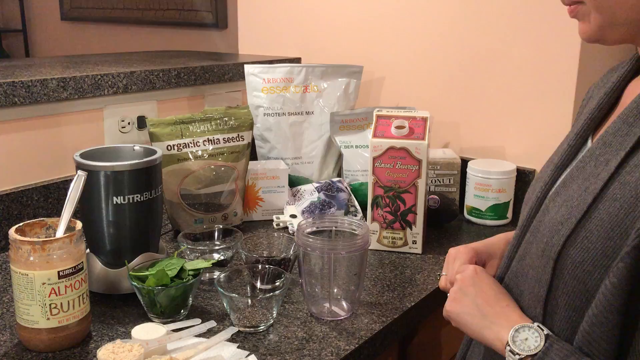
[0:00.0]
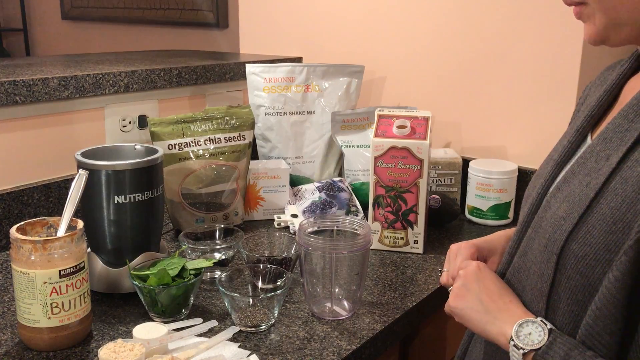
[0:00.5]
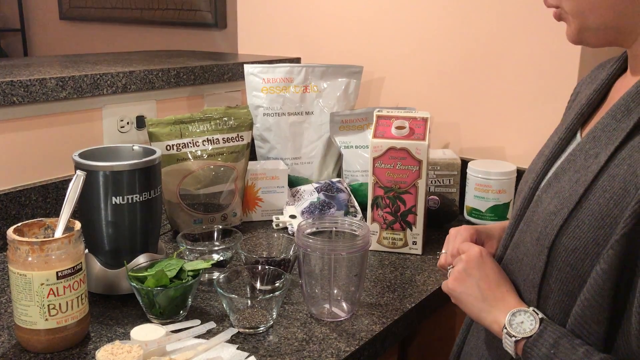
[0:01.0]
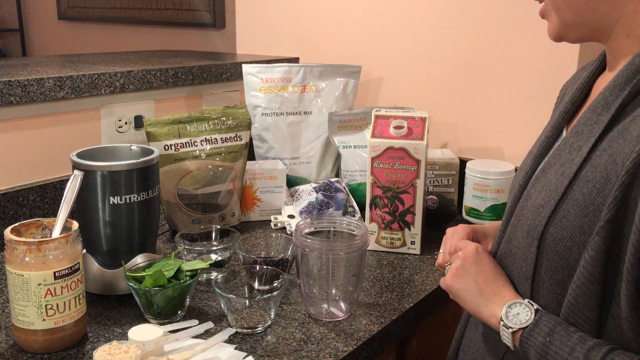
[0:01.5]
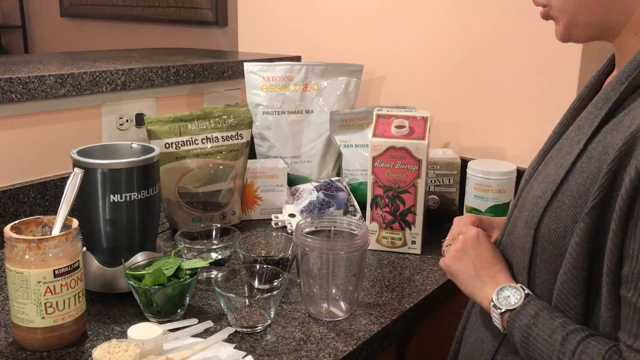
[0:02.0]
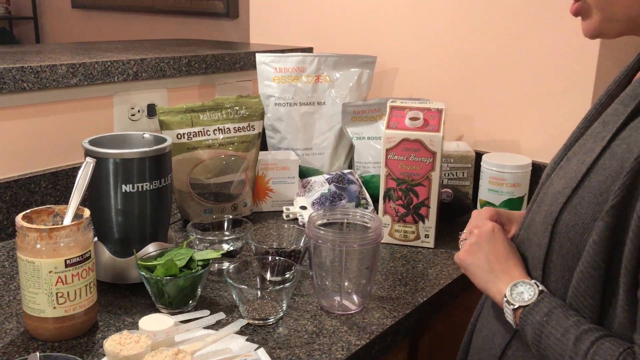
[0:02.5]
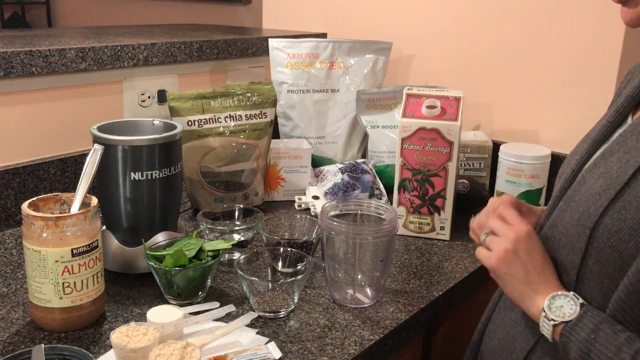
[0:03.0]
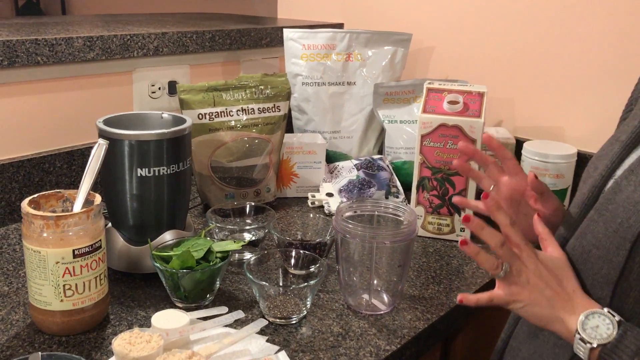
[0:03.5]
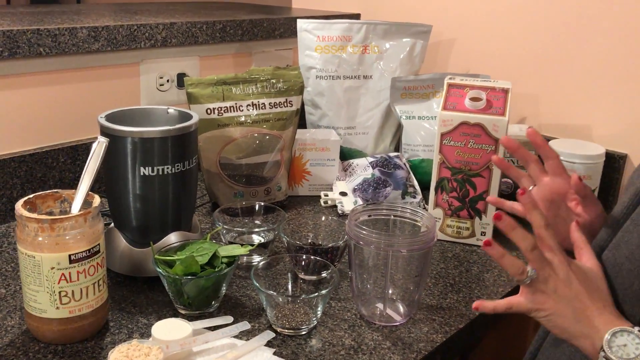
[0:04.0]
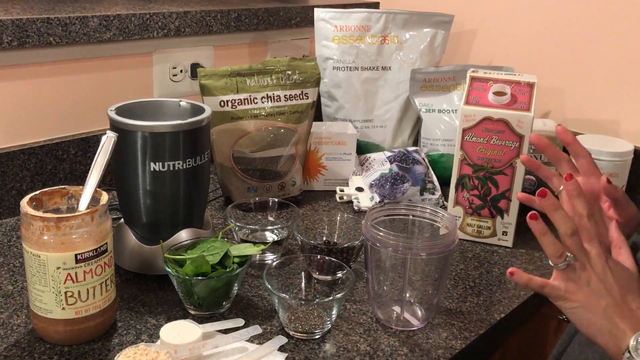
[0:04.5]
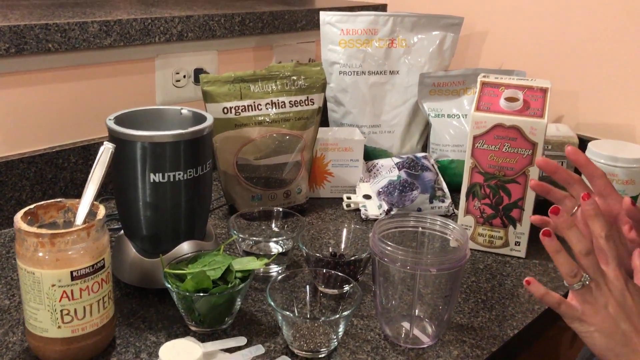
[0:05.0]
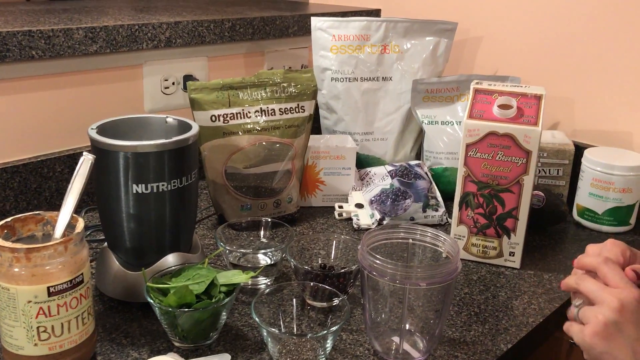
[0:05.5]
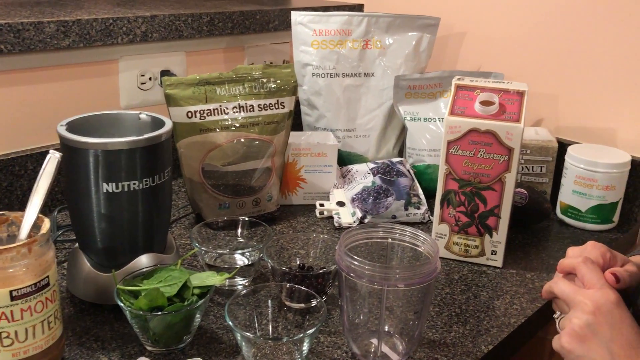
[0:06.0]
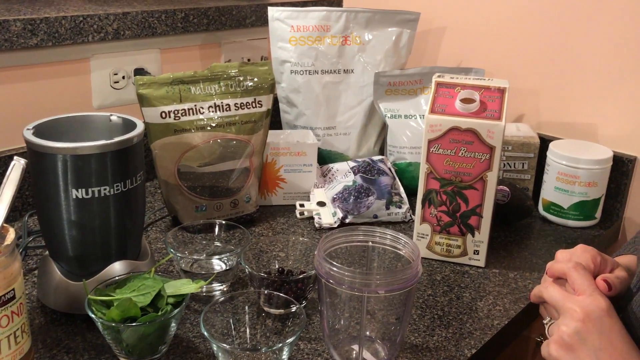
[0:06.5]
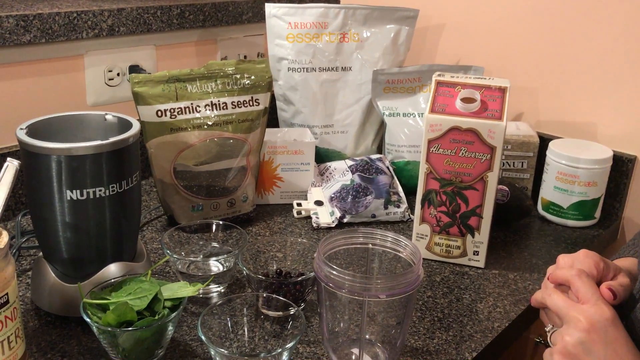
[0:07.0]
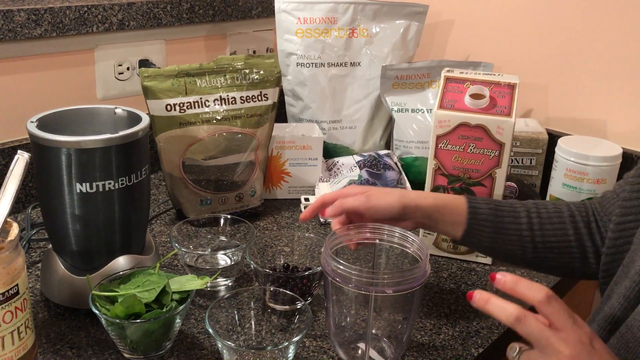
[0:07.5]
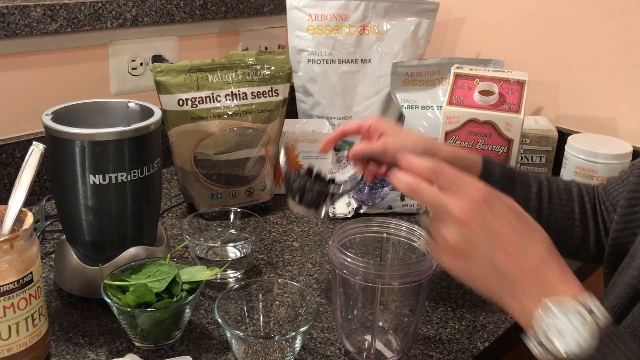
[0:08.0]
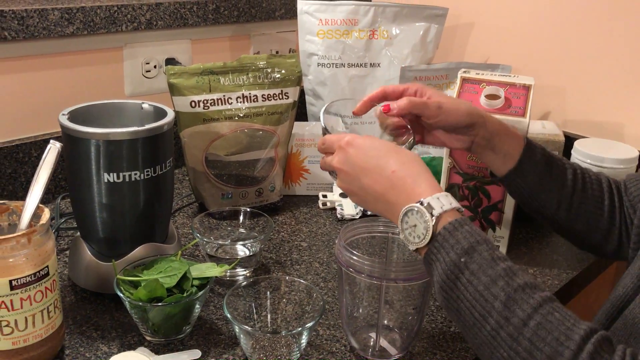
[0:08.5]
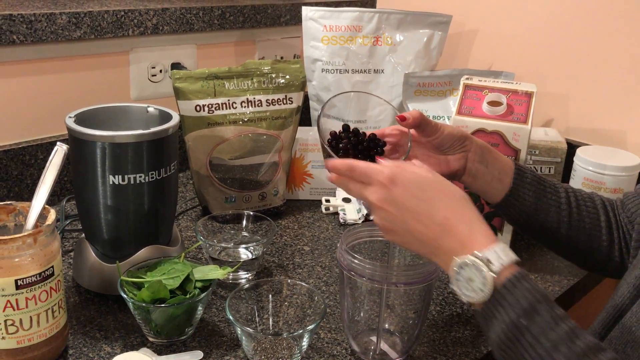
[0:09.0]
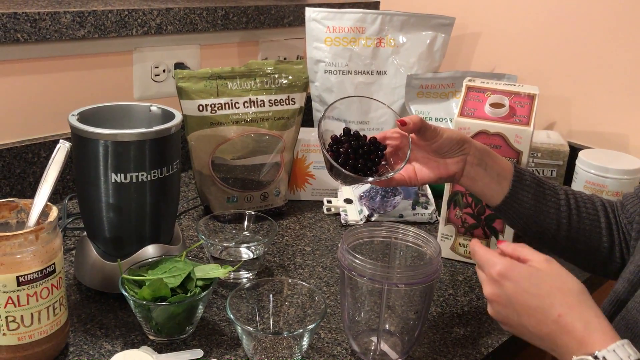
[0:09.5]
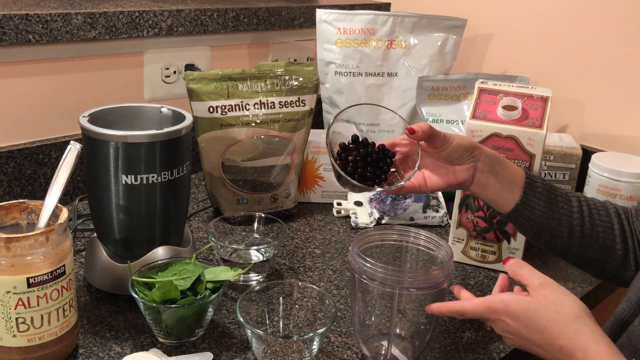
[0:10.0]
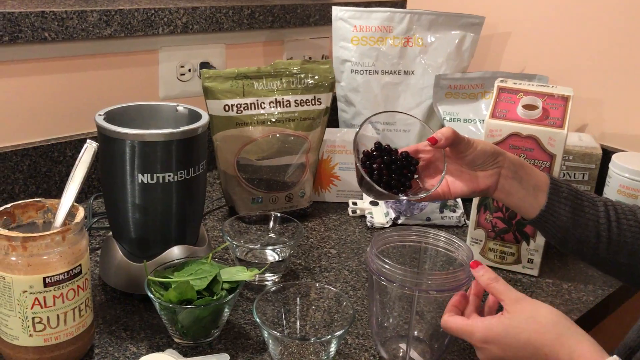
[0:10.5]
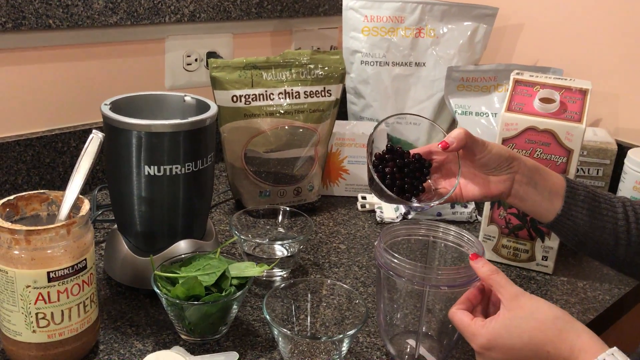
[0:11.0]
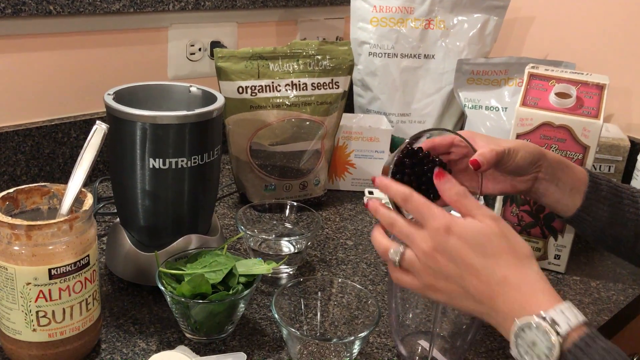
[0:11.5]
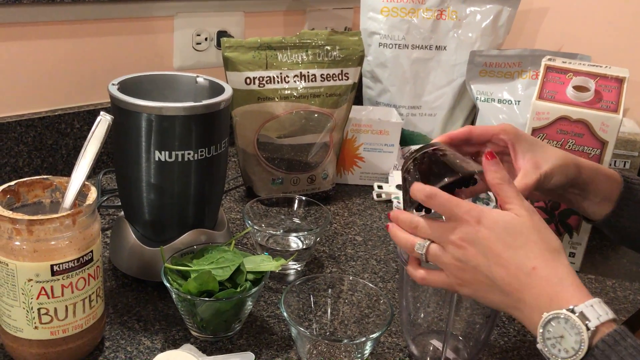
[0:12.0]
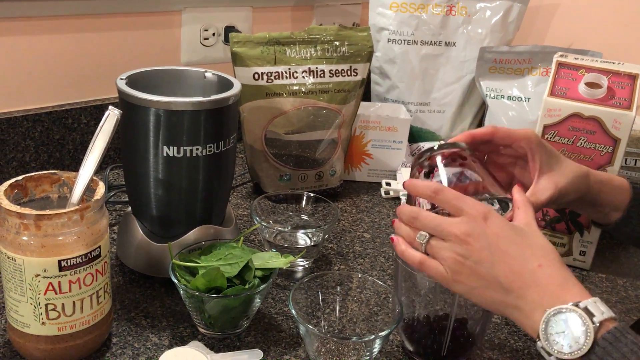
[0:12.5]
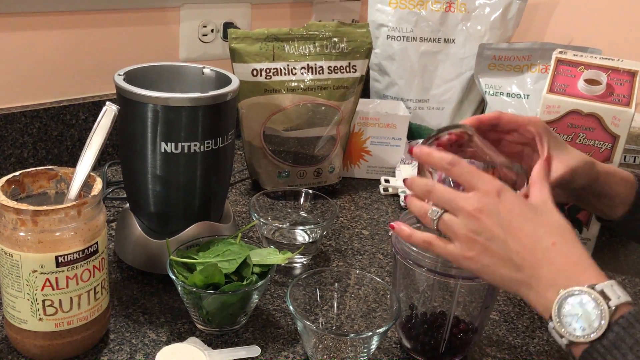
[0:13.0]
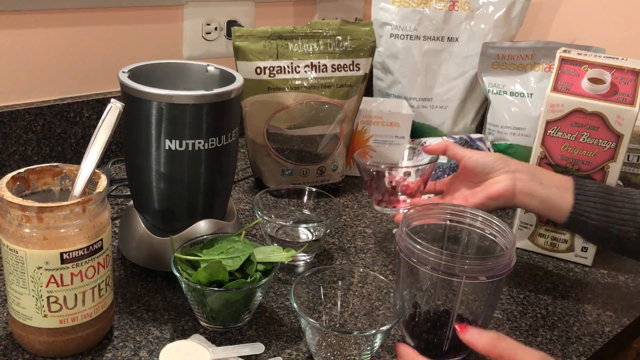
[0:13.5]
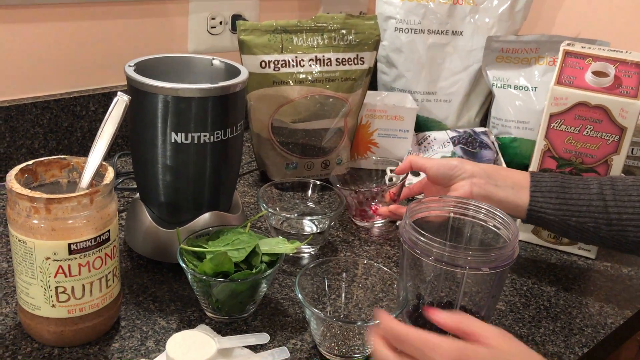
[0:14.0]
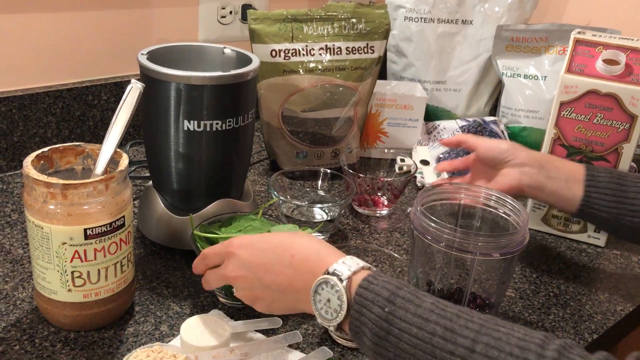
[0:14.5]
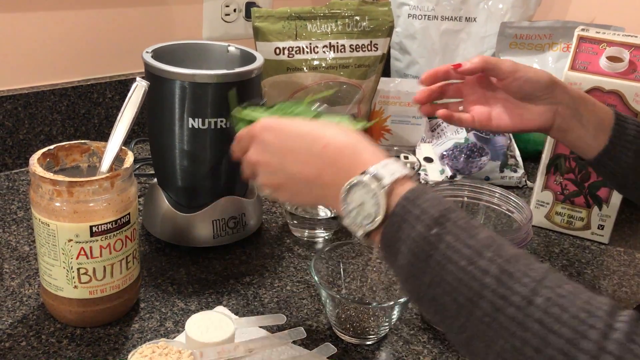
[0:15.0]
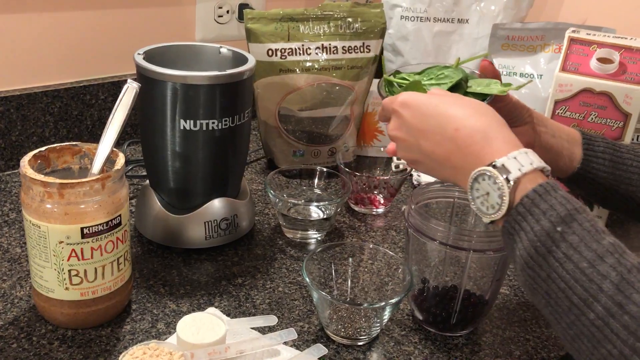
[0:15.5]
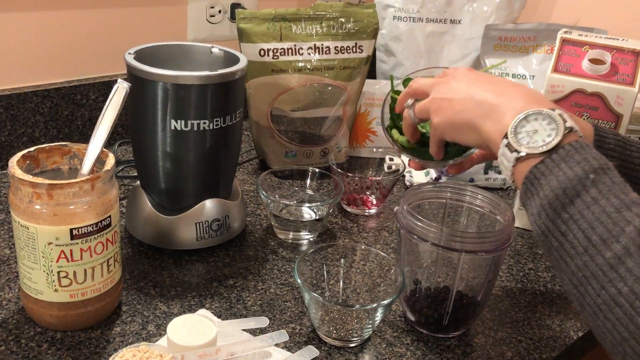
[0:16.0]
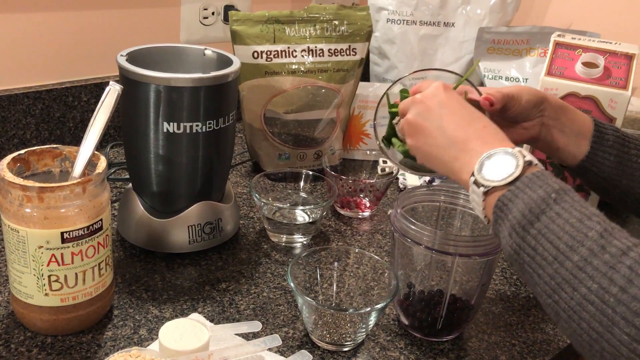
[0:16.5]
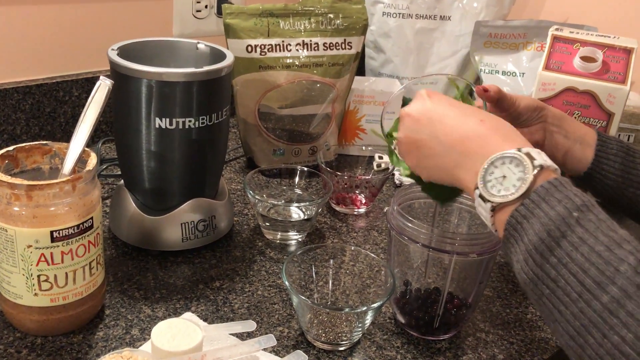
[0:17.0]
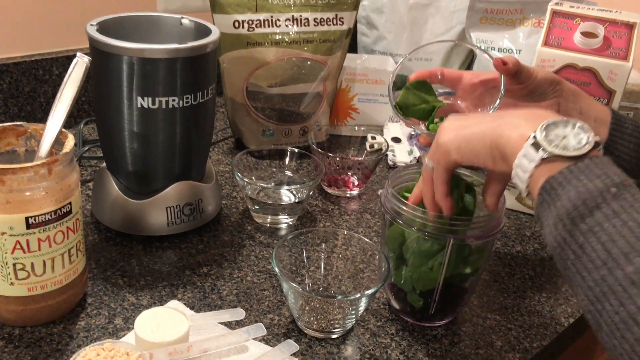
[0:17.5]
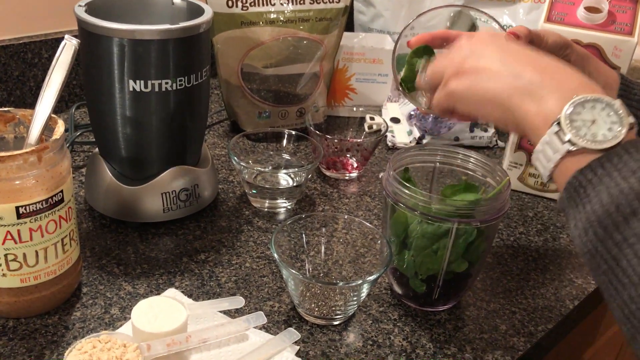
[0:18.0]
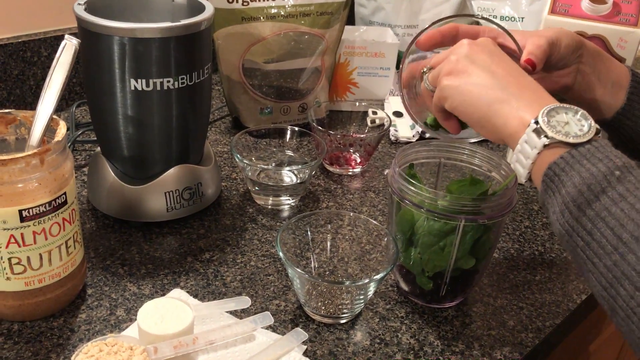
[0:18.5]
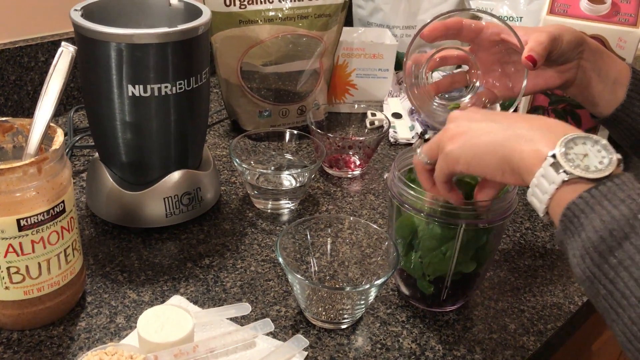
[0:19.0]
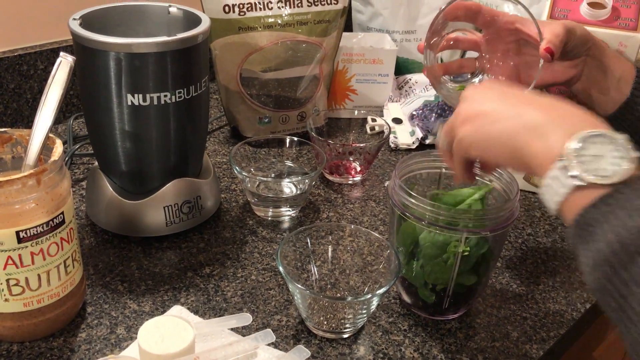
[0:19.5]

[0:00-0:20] A woman is in a kitchen setting, with only her hands and part of her face visible. She wears a grey jersey and has a watch on her left wrist. She is standing, and in front of her are a lot of ingredients and some glass bowls, all on top of a grey surface that looks like the top of a kitchen cupboard. The walls are peach in colour, and an electricity socket is close by. Some of the ingredient names are visible, such as "organic chia seeds" and "almond butter", and there is a protein shake mix; some ingredients have no names, and some names are not really visible. A Nutribullet, which looks like a blender, is close to her.